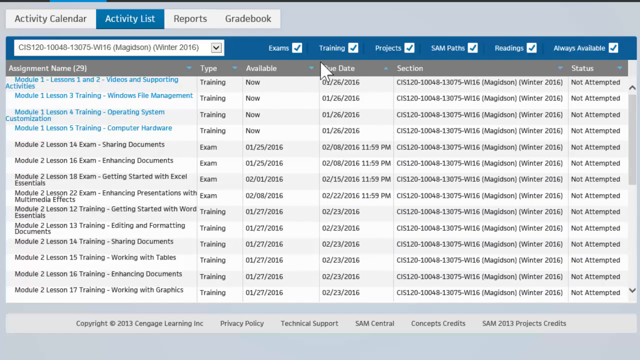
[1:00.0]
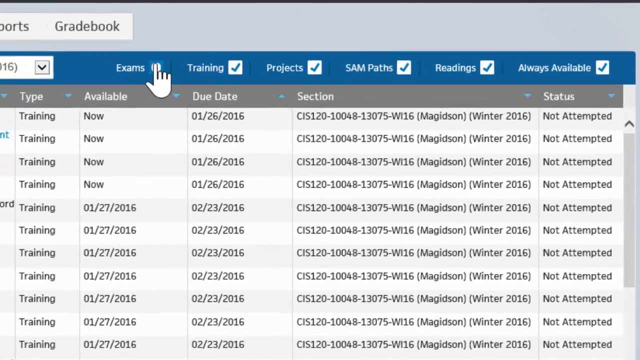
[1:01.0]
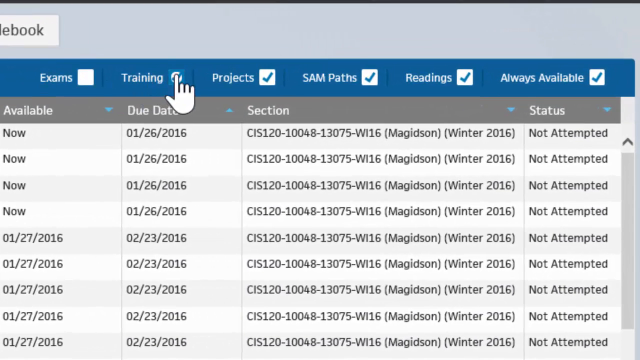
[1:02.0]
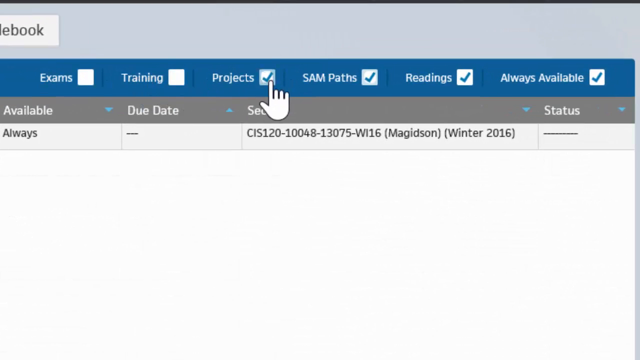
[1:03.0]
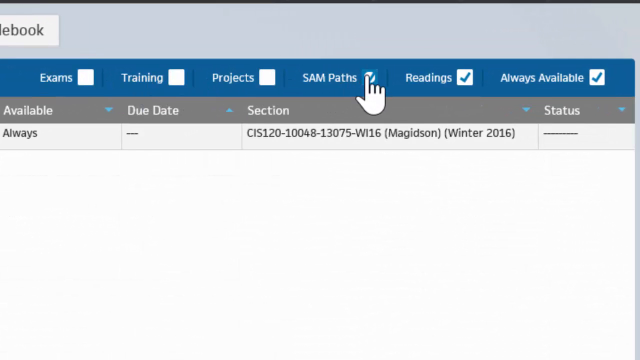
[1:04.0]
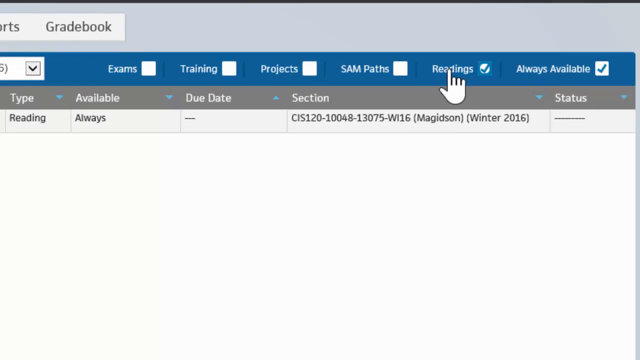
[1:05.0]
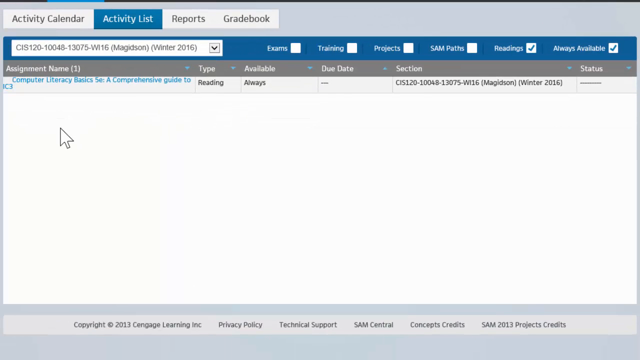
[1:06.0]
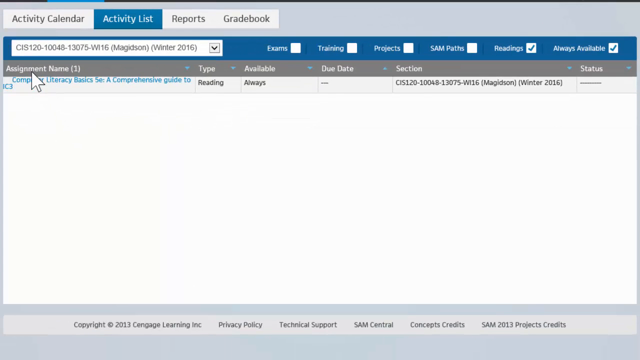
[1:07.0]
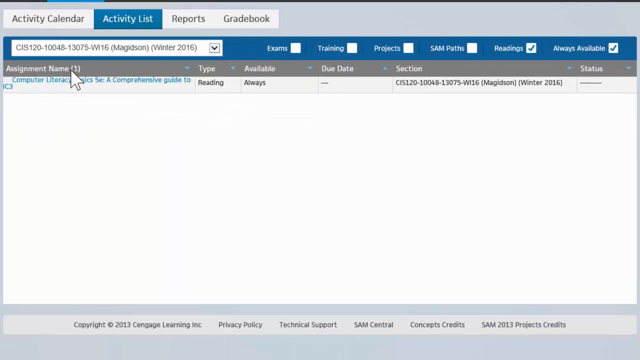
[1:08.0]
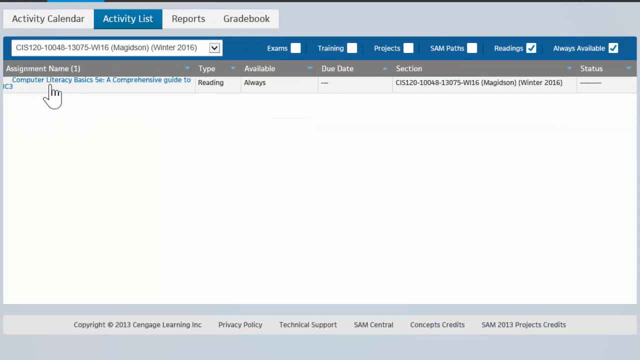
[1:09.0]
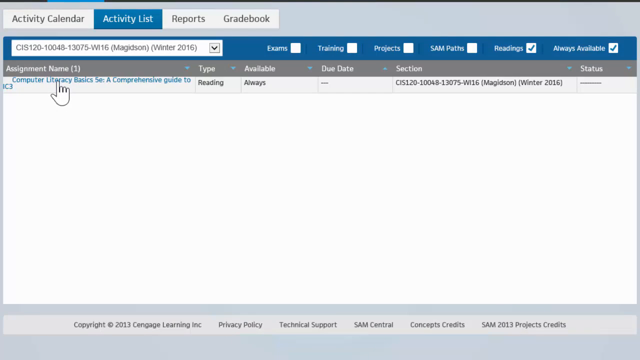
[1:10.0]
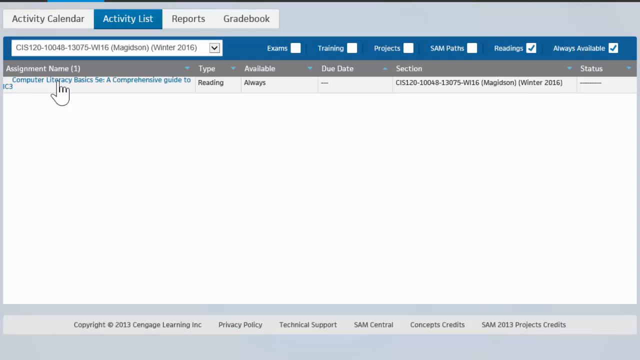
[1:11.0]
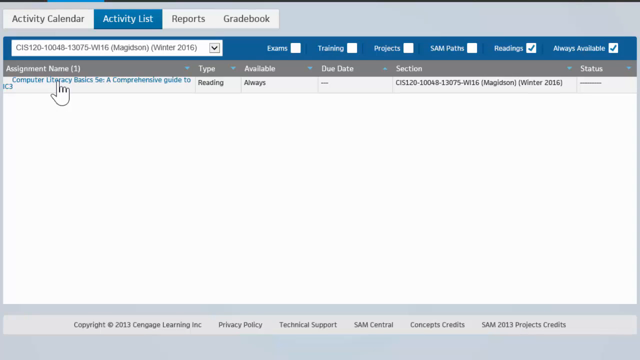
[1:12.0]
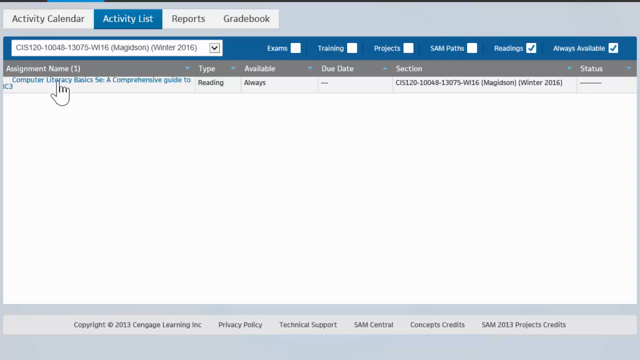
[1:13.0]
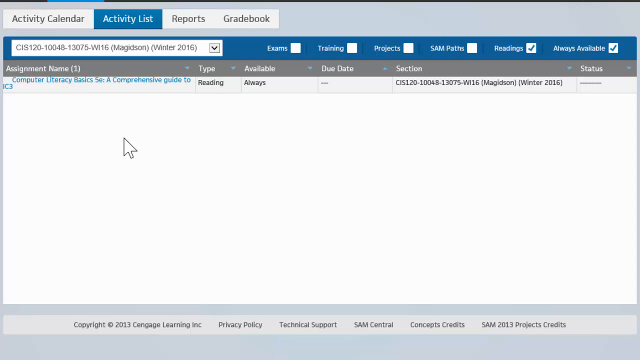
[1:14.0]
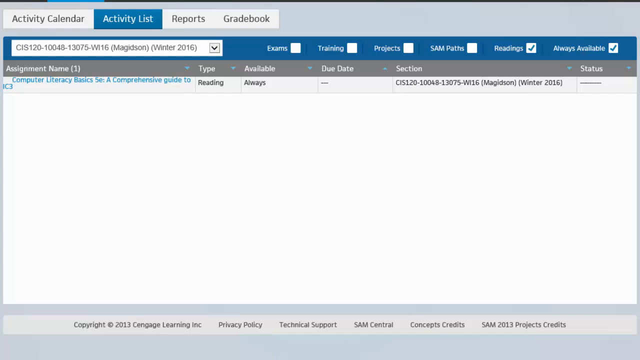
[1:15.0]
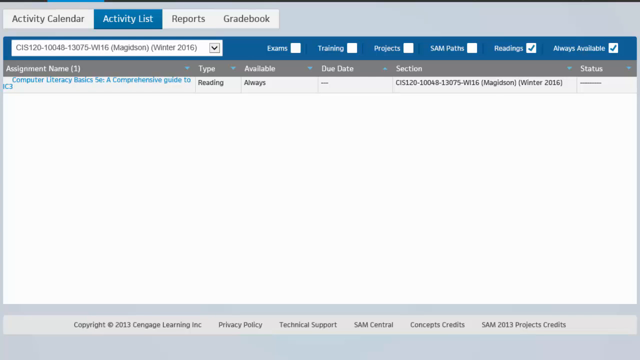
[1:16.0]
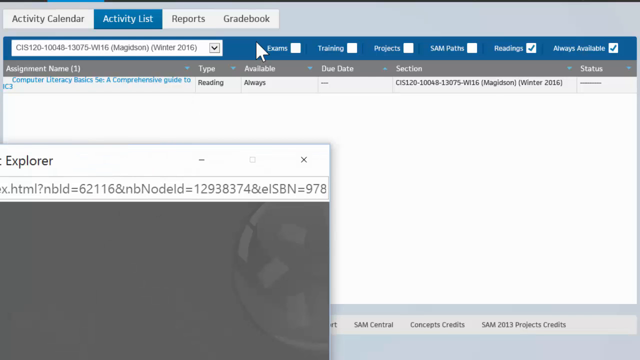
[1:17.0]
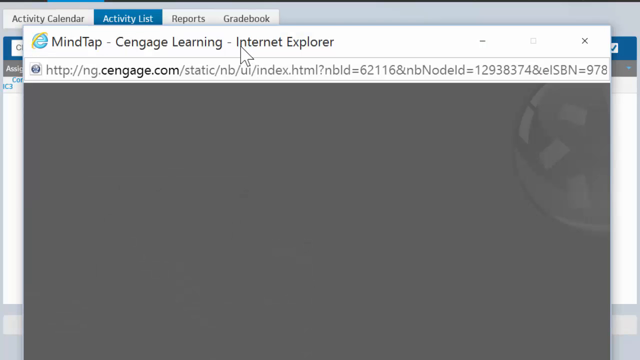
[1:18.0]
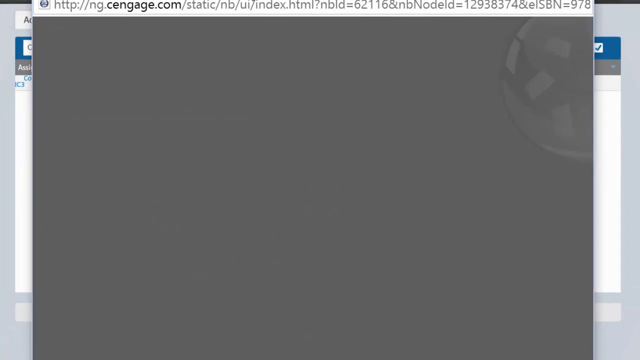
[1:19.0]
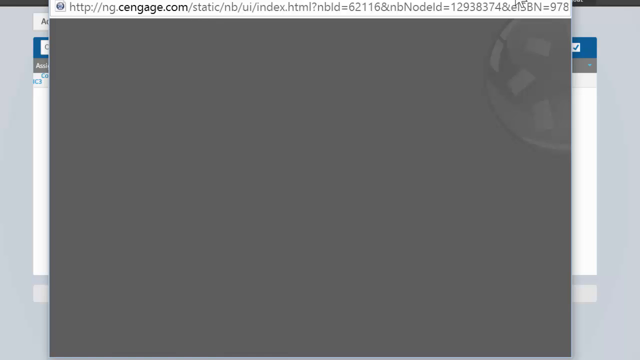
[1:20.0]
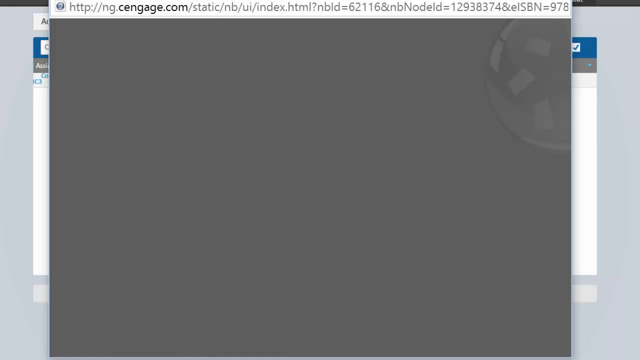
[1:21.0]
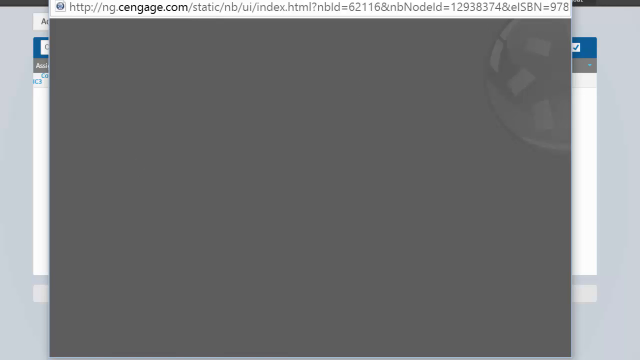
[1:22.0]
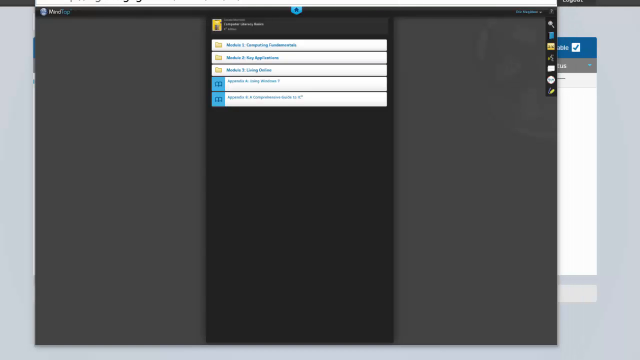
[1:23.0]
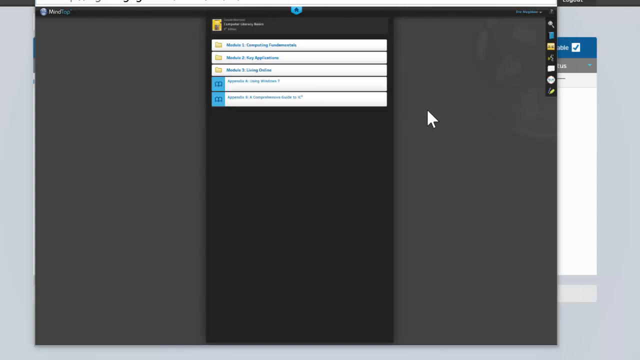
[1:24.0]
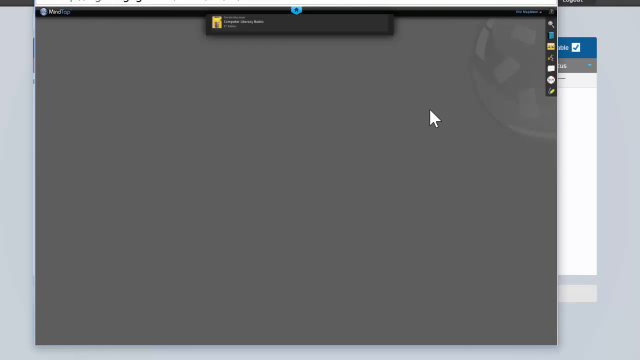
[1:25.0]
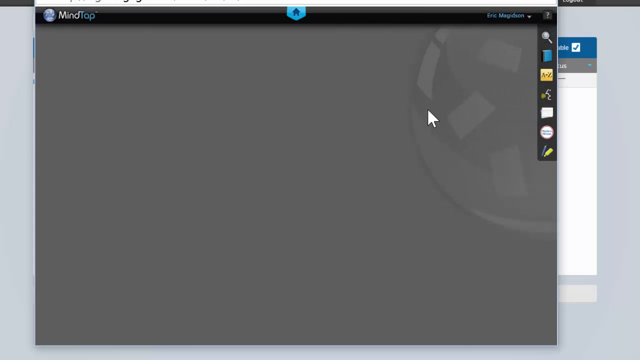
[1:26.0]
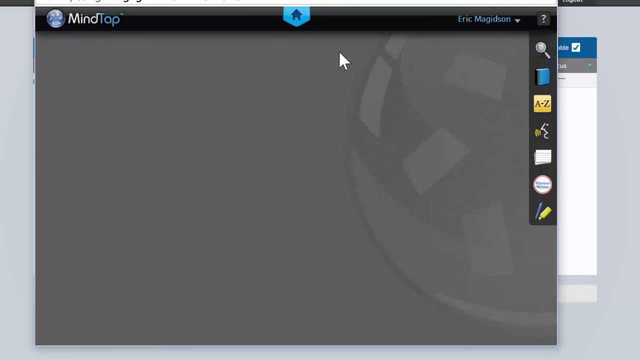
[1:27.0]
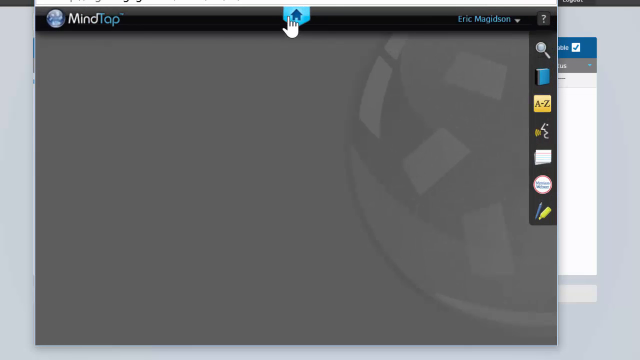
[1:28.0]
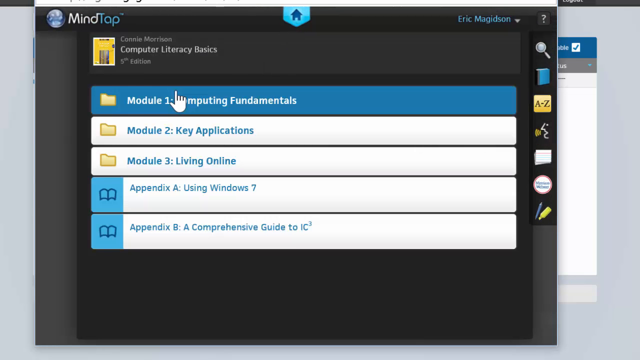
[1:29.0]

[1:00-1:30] A rather slow zoom moves into the upper right part of the web page. The cursor, which looks like a human hand and immediately afterward an arrow, moves rather linearly and clicks on some squares that initially have colored dots inside them. Once clicked, the dots disappear, leaving completely white squares. The view then widens again in a reverse zoom, and the cursor, as an arrow and as a hand, is positioned on a series of words in the left part of the web page, written in a blue font on a white background. After the cursor moves around these blue words, it appears for a few moments in the left part of the frame, and then a gray, empty window appears inside the frame. The cursor moves this window to the center of the screen.